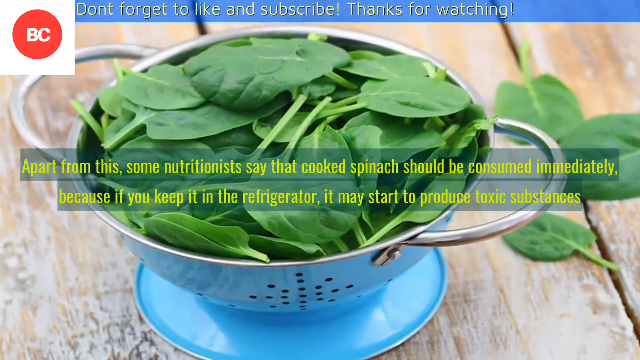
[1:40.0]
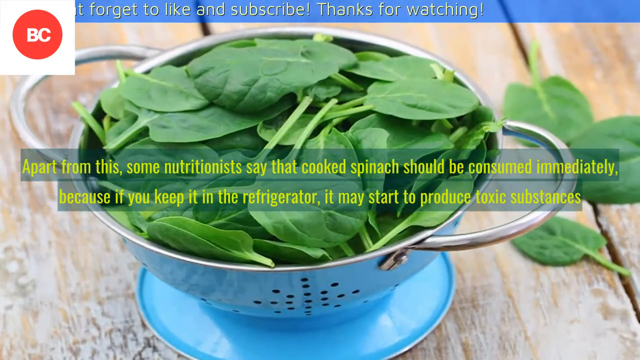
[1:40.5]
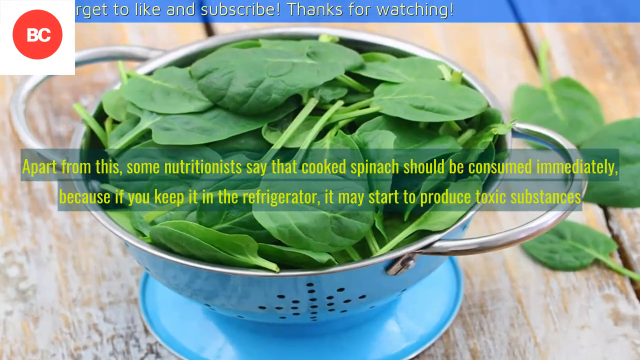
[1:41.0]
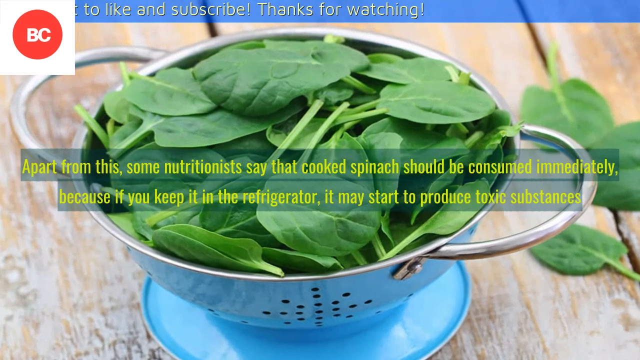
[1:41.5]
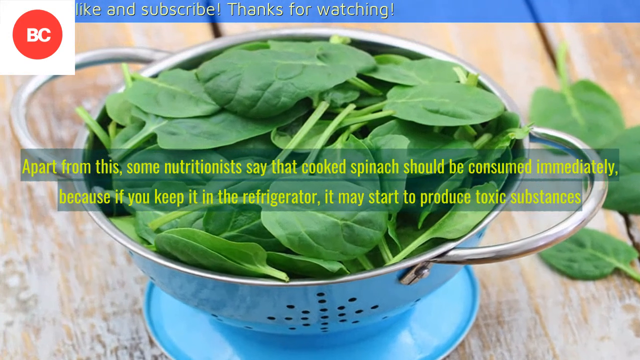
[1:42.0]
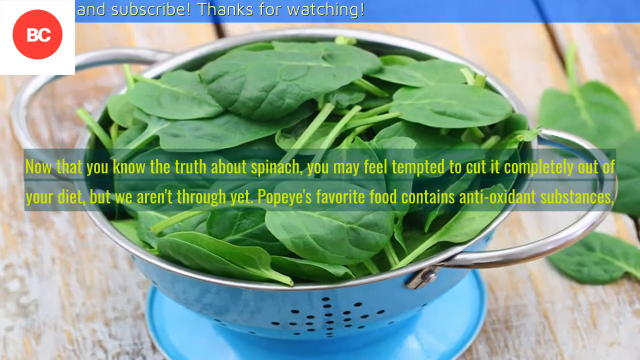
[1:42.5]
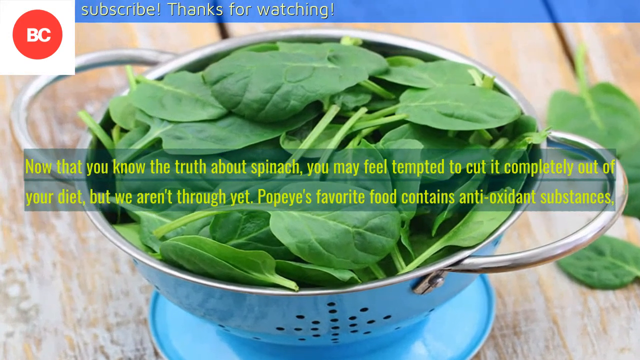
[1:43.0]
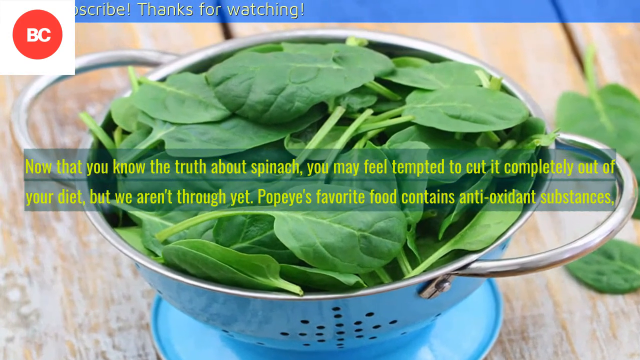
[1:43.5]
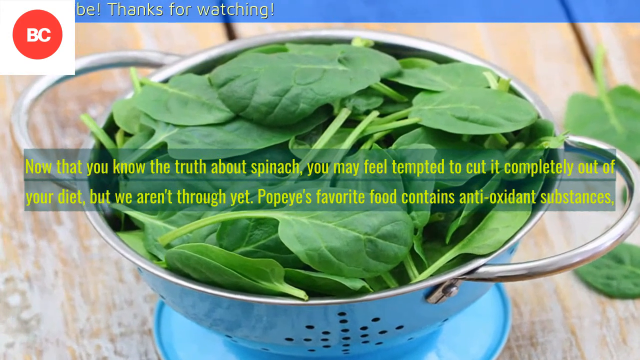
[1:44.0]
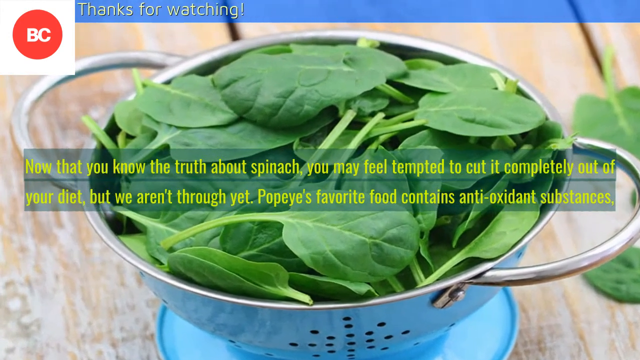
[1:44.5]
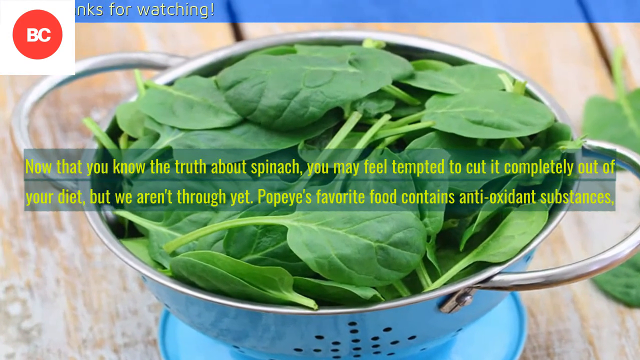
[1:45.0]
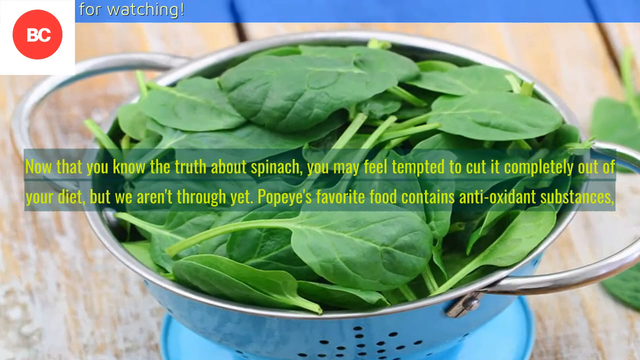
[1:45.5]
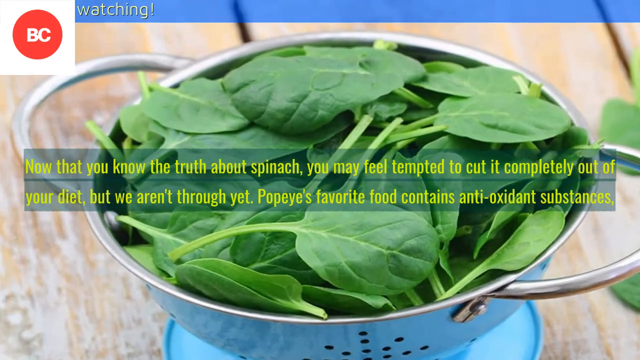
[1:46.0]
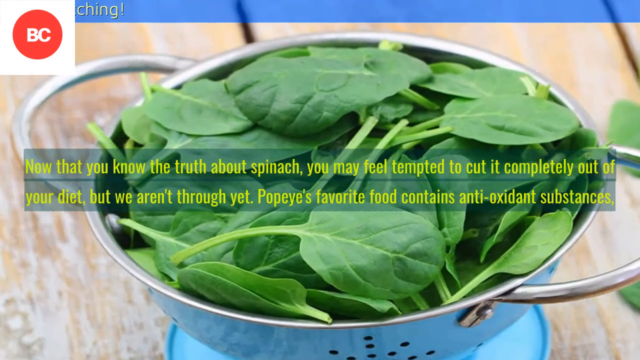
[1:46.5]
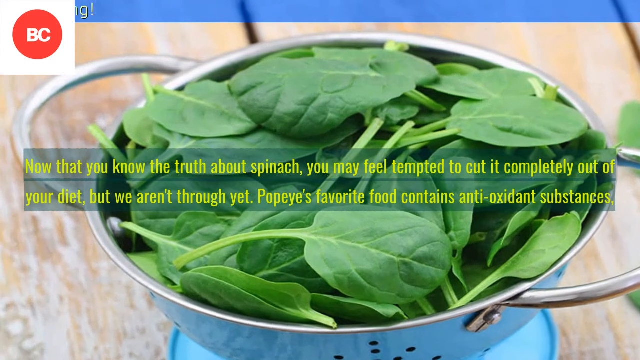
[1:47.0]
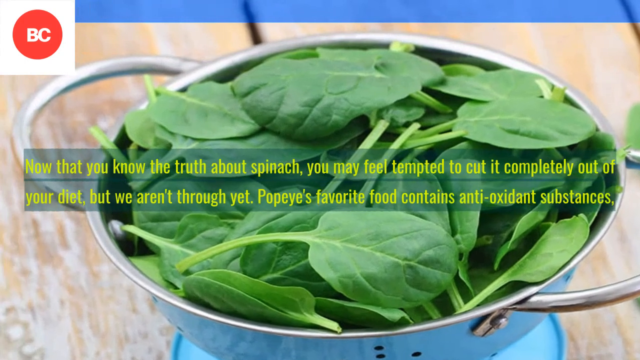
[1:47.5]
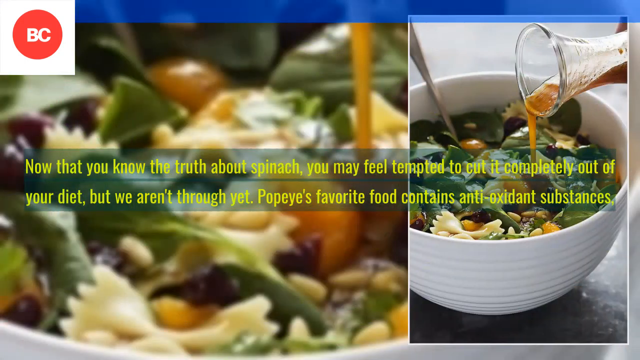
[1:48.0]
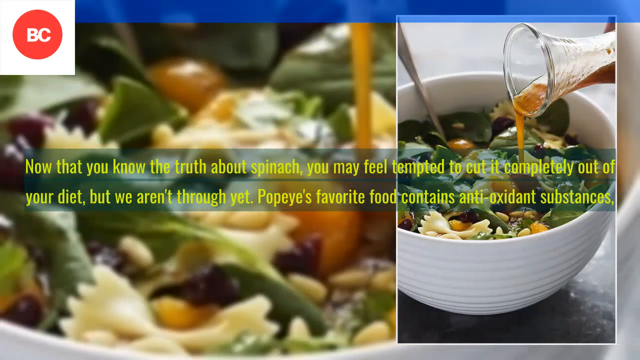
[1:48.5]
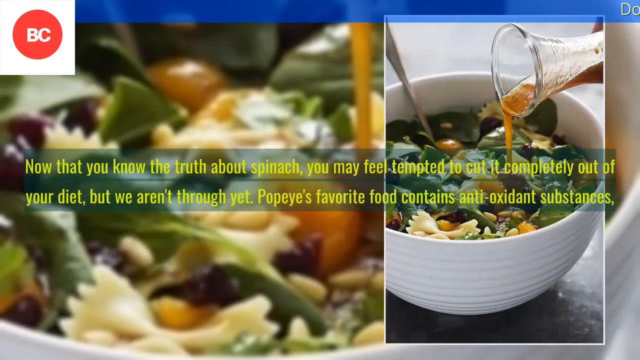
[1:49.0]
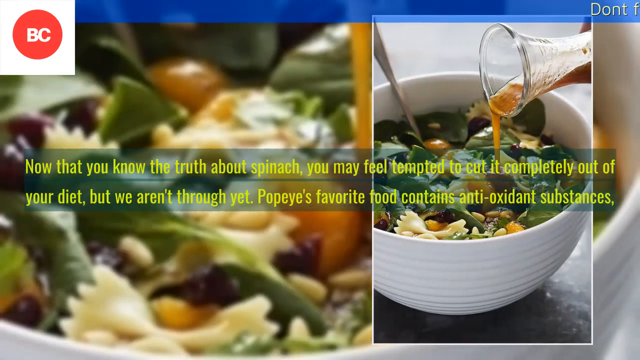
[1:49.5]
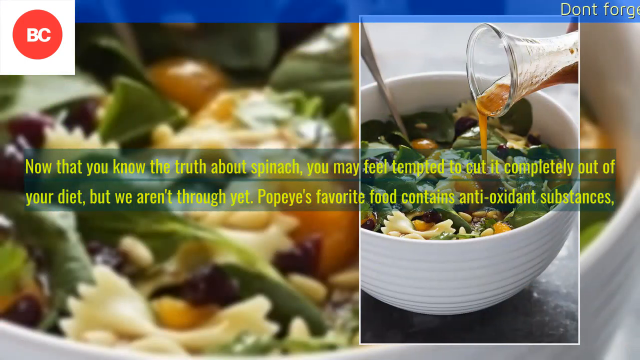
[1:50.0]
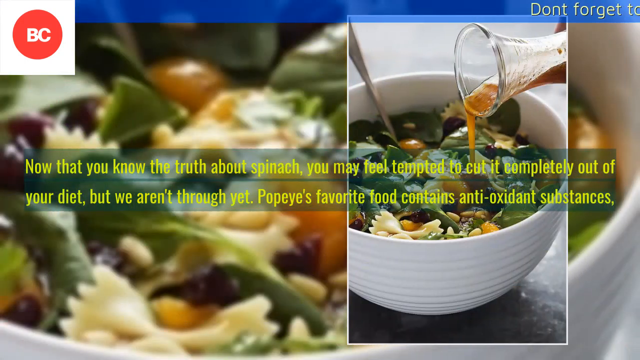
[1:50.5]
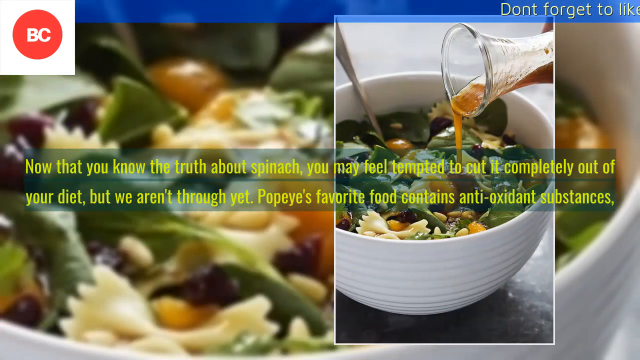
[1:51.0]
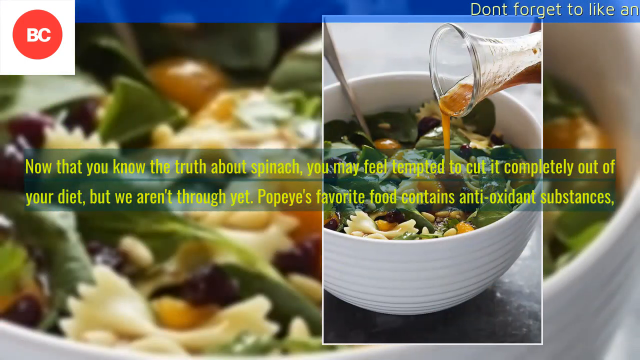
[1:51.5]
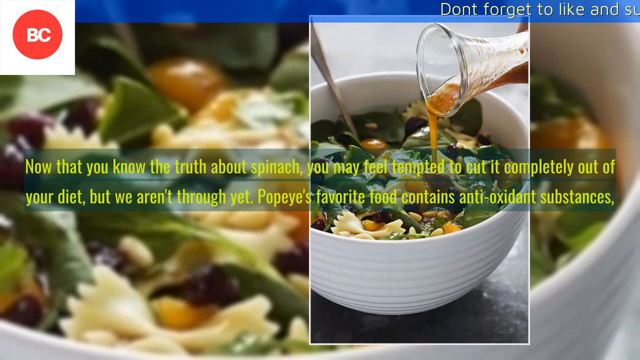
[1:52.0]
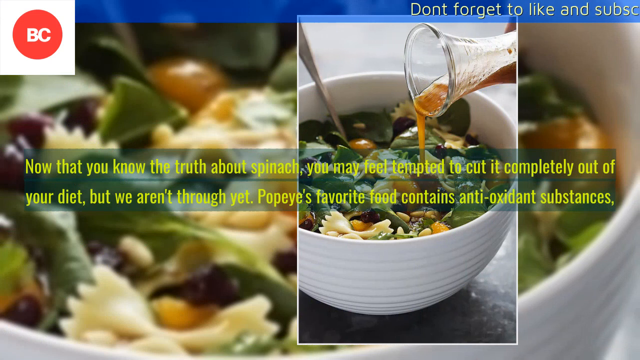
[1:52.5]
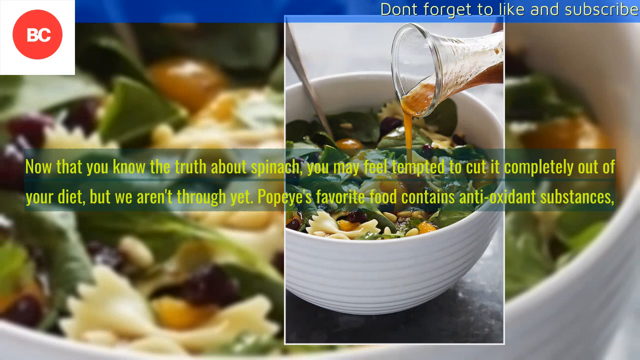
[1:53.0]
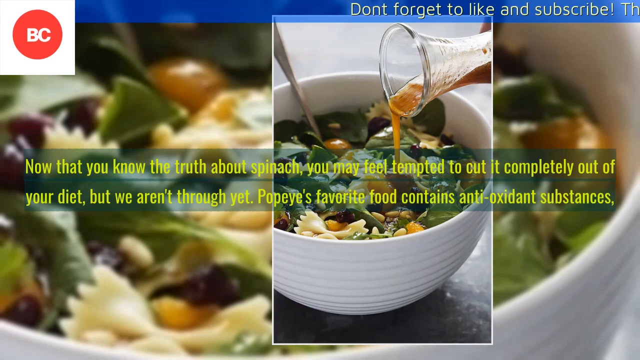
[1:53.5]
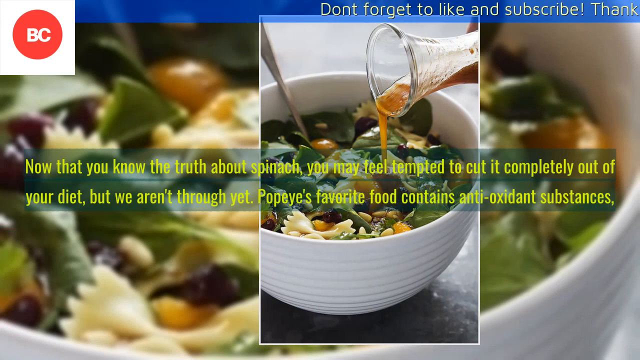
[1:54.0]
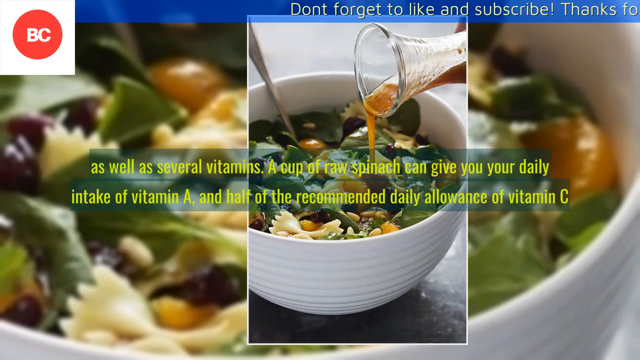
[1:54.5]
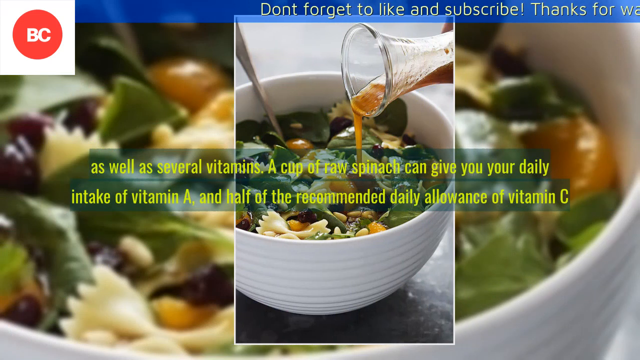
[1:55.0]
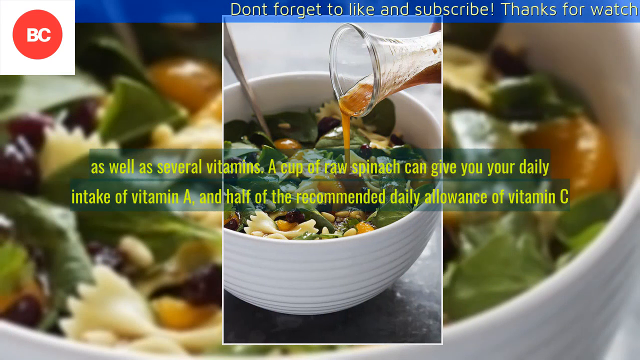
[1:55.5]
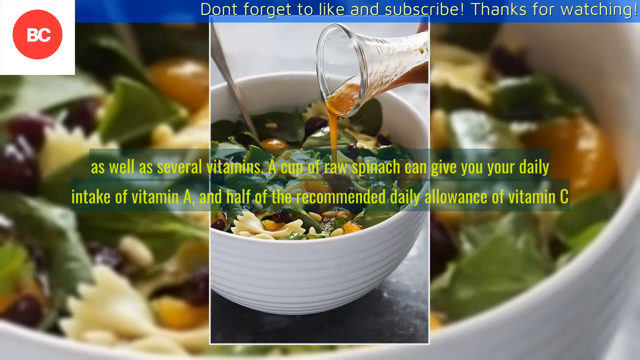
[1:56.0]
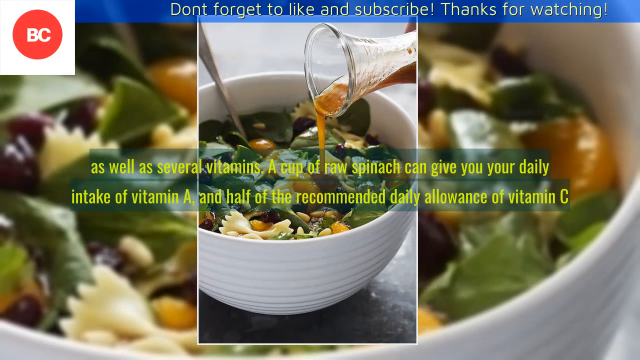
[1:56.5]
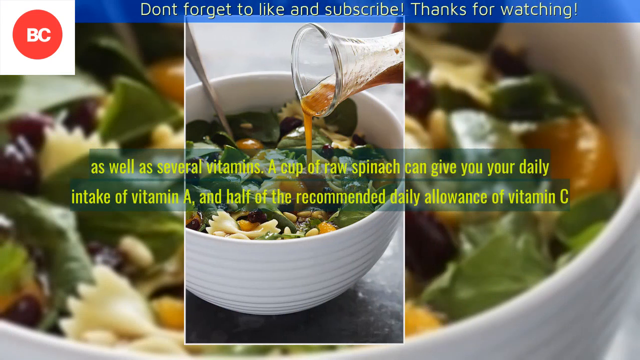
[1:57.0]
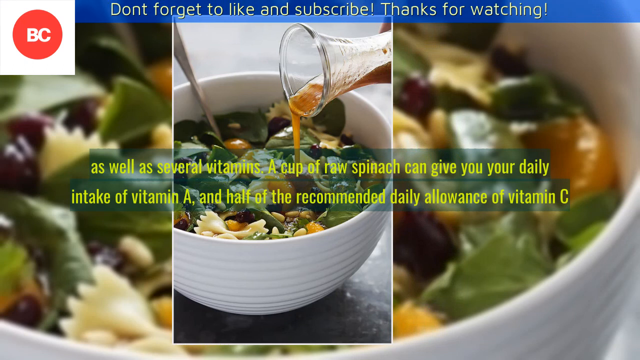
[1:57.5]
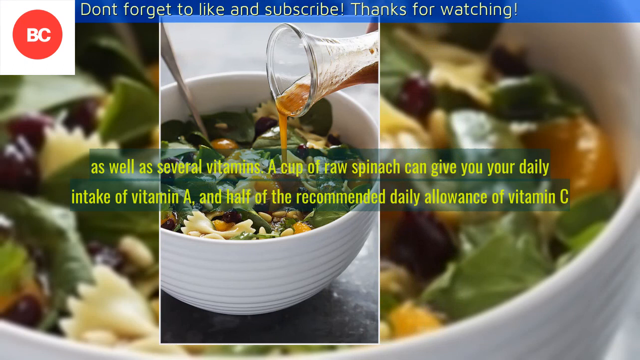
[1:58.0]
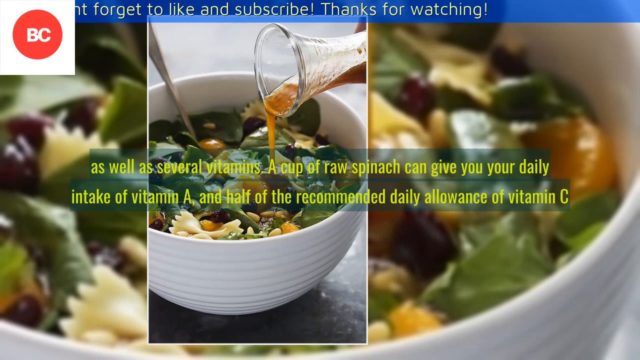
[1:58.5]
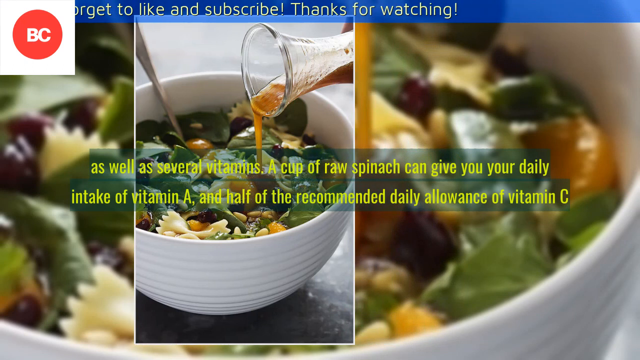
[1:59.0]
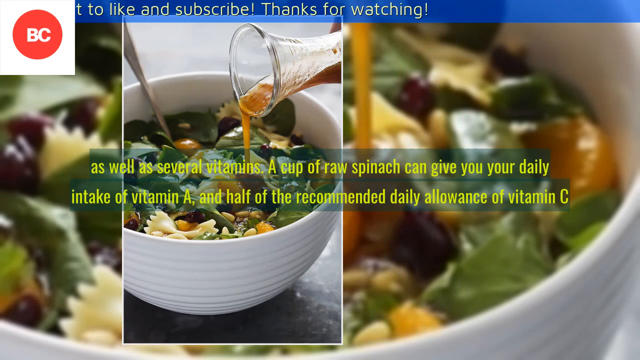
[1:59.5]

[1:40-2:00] A bowl-shaped strainer filled with spinach is shown with more text. The BC logo is in the top left, and text moves across the top of the screen. The image zooms in on the left side while text is displayed about why spinach may not be as beneficial as thought. The image then switches to a bowl of spinach with pasta, with some sort of liquid being poured on and a silver spoon in the back of the bowl. The image moves across the screen from the right to the left side, while a zoomed-in version of it is shown in the background. The text keeps adding facts about why spinach is not as beneficial as portrayed in media.